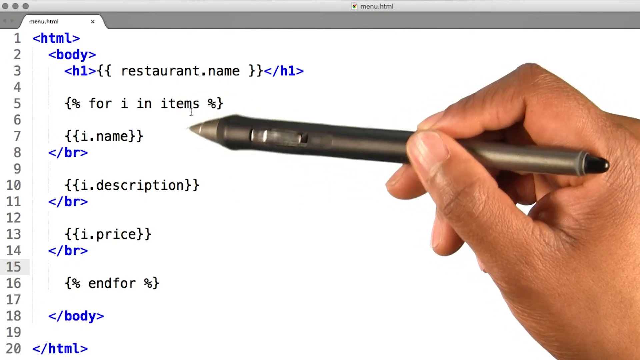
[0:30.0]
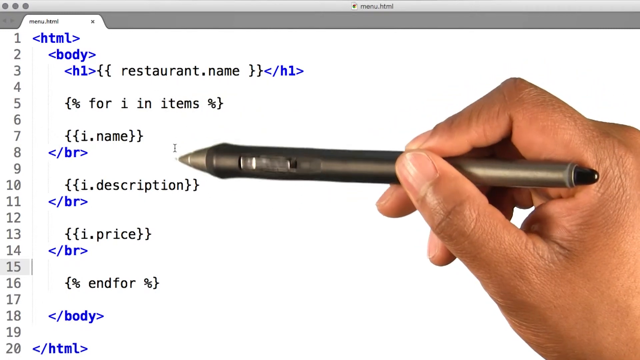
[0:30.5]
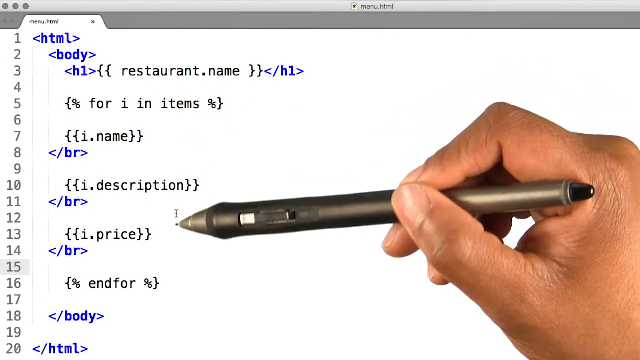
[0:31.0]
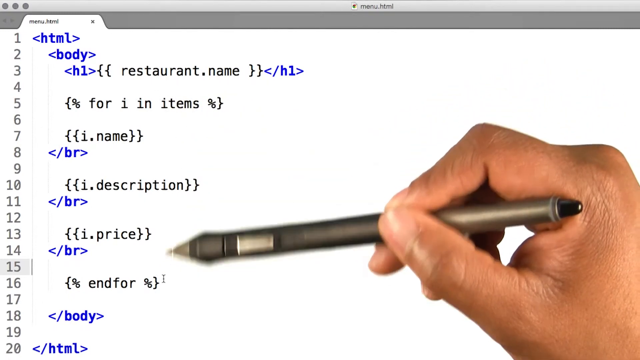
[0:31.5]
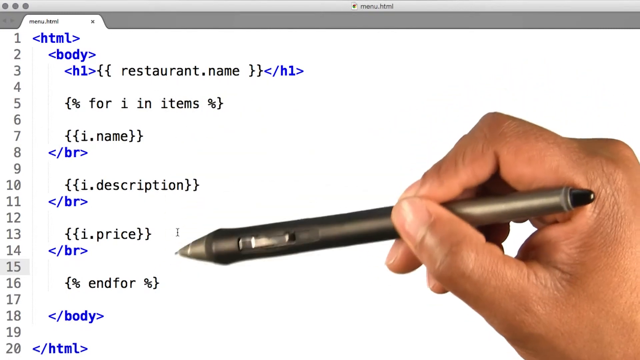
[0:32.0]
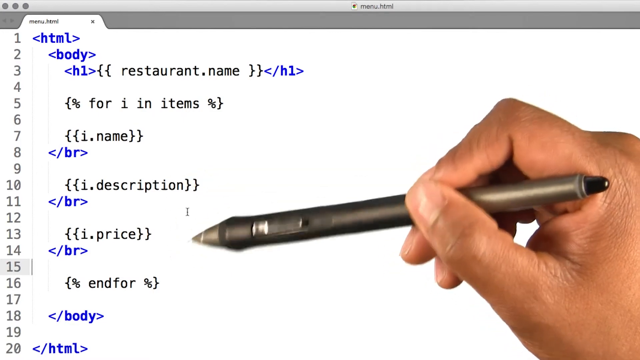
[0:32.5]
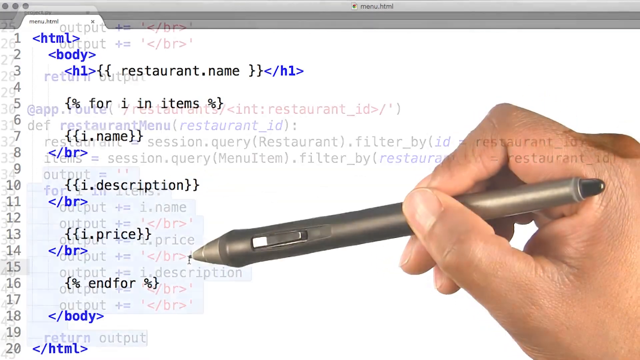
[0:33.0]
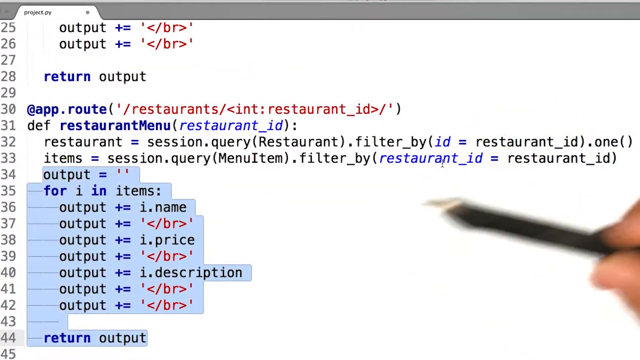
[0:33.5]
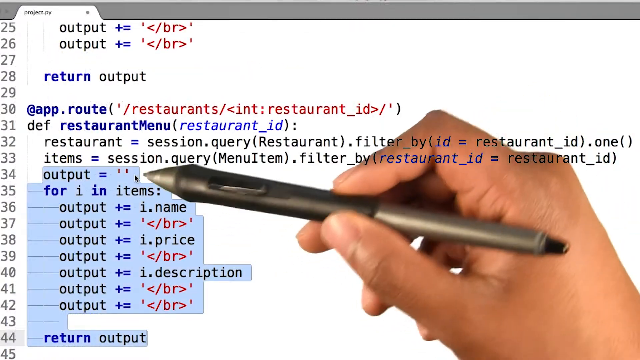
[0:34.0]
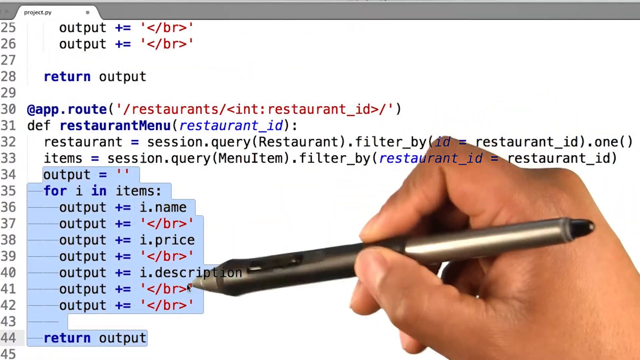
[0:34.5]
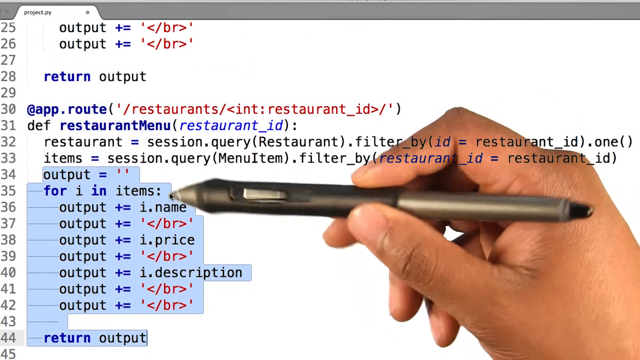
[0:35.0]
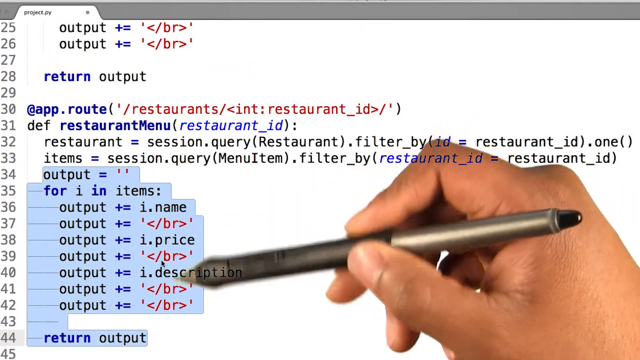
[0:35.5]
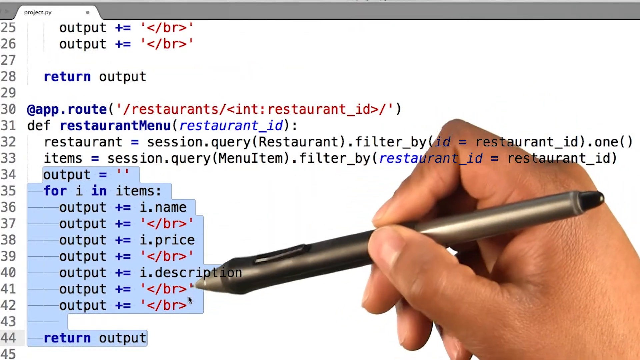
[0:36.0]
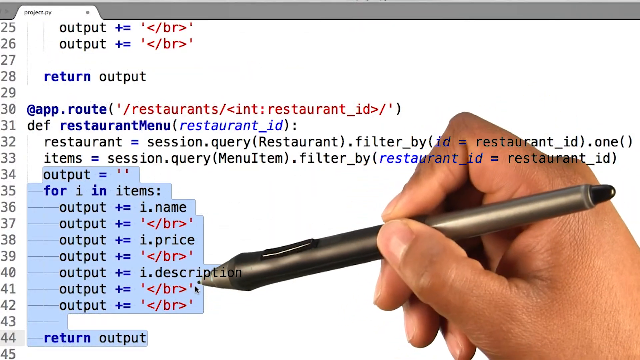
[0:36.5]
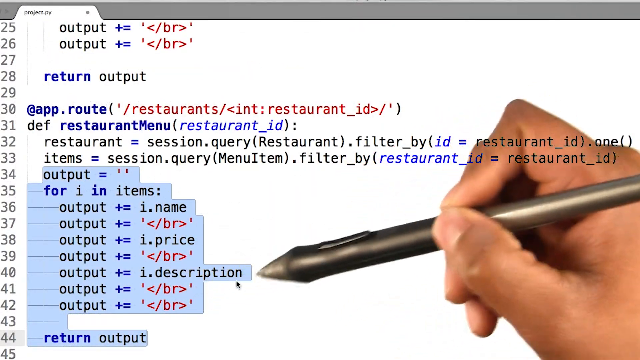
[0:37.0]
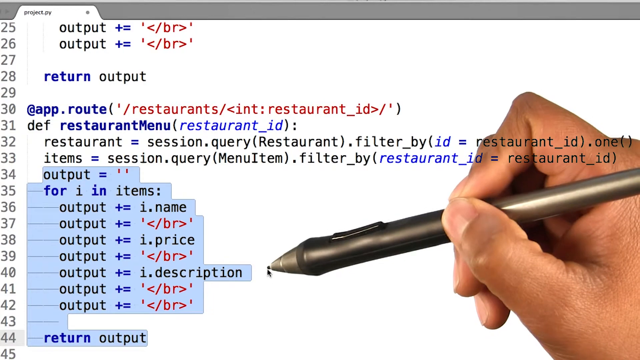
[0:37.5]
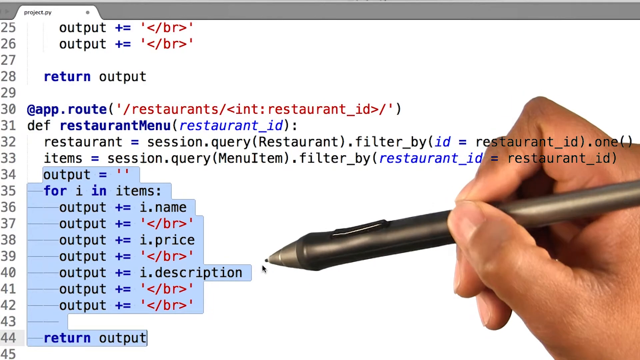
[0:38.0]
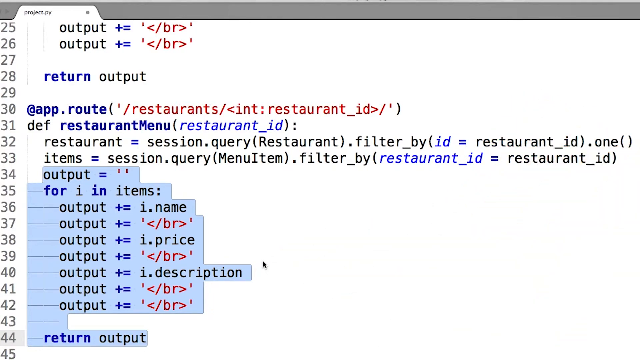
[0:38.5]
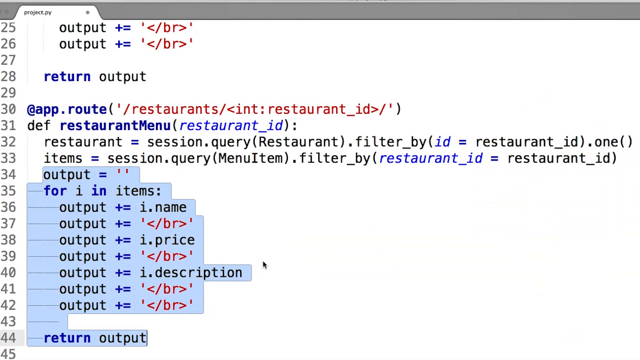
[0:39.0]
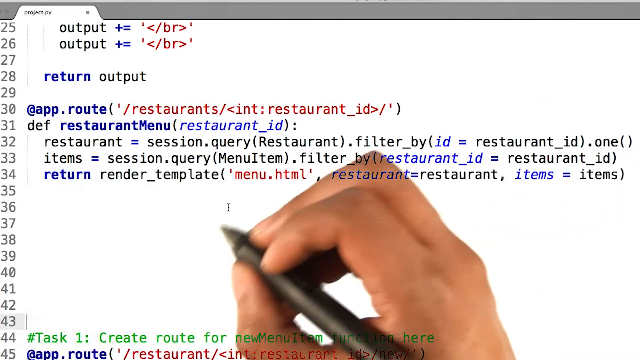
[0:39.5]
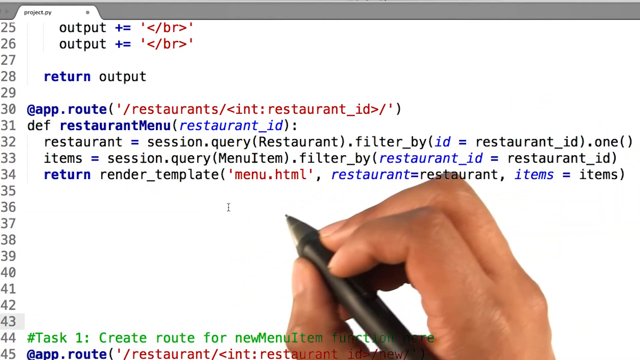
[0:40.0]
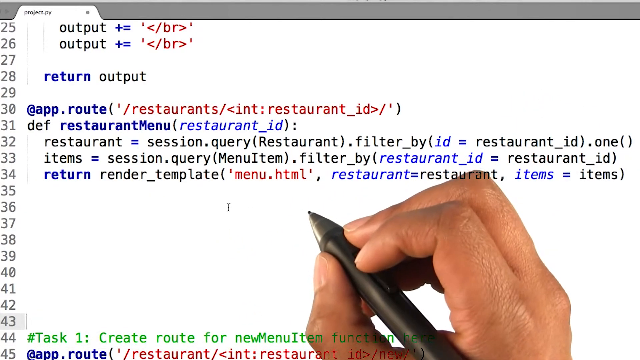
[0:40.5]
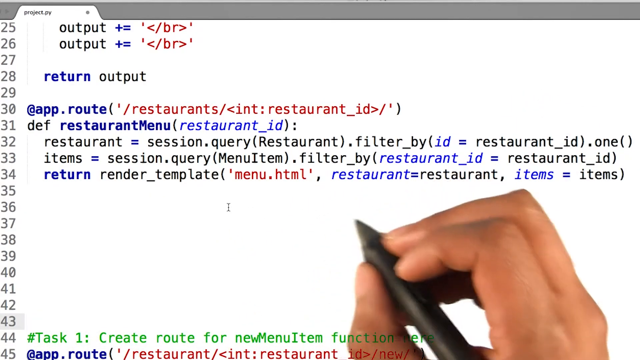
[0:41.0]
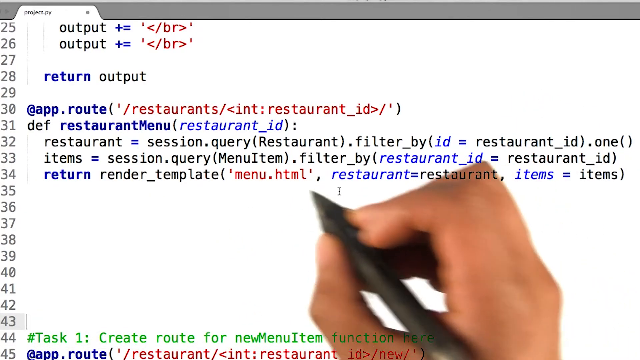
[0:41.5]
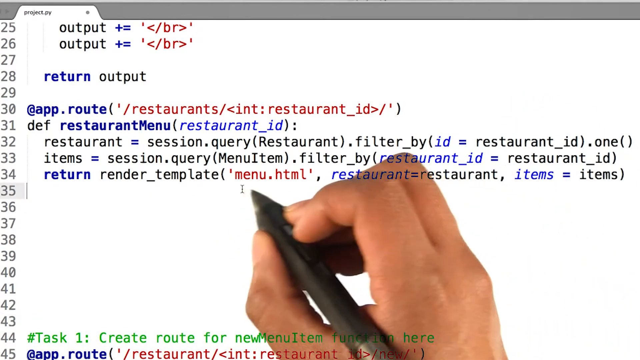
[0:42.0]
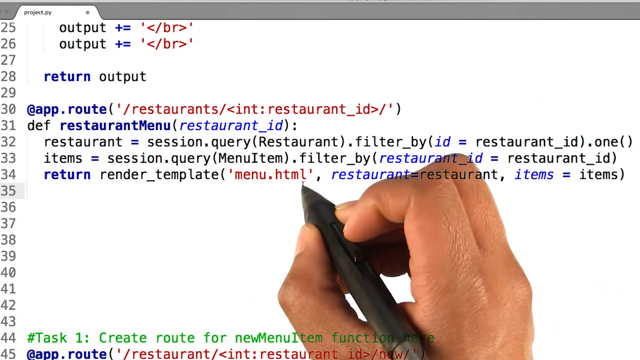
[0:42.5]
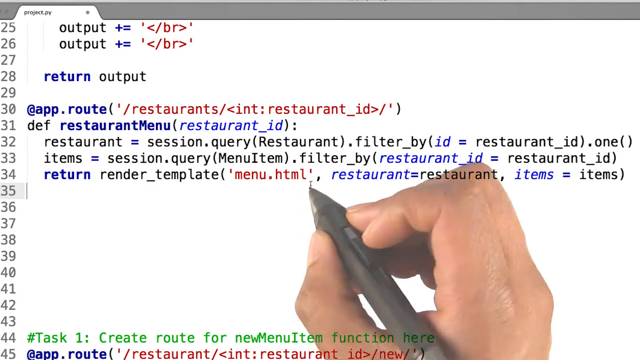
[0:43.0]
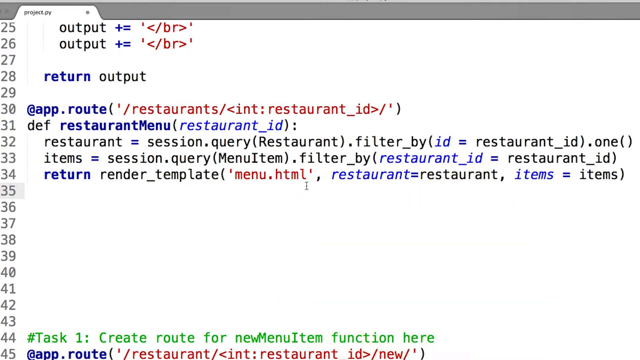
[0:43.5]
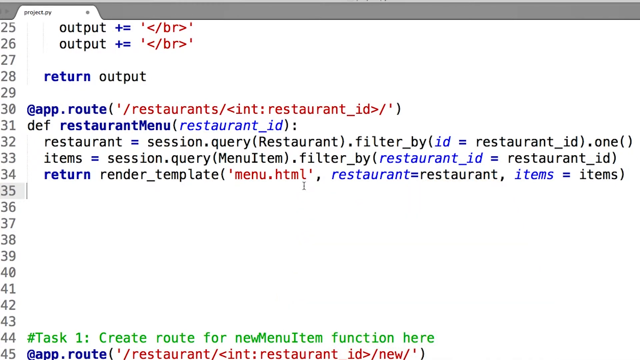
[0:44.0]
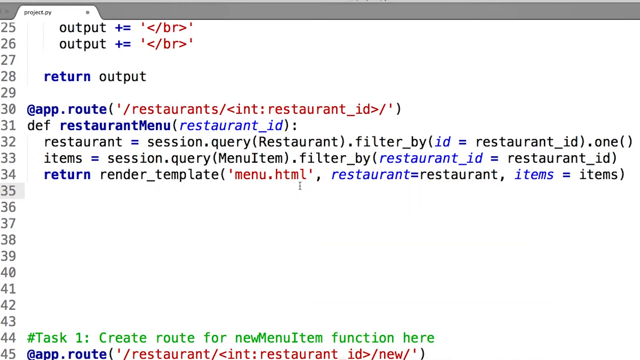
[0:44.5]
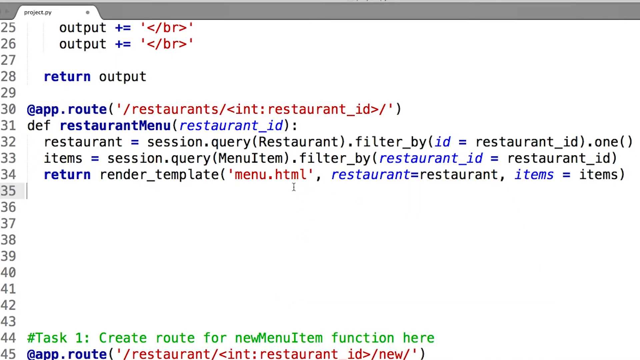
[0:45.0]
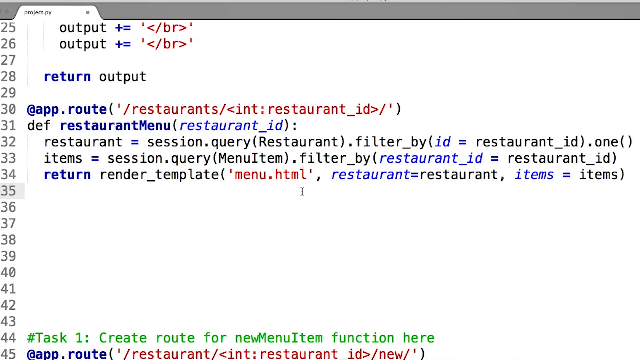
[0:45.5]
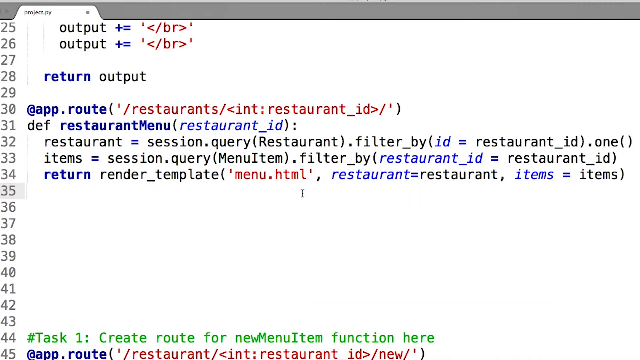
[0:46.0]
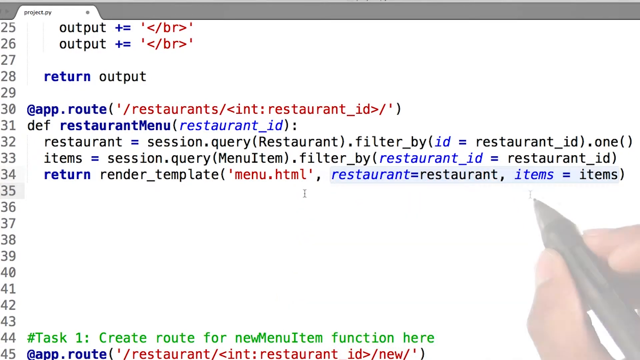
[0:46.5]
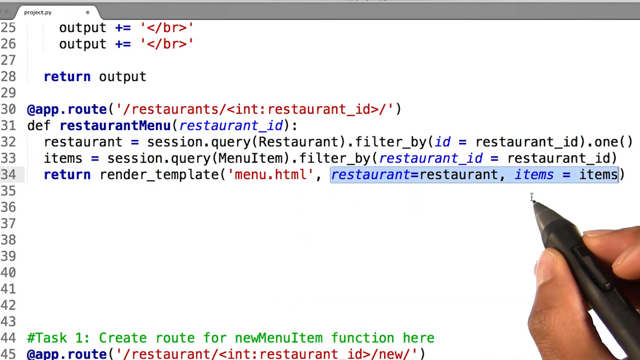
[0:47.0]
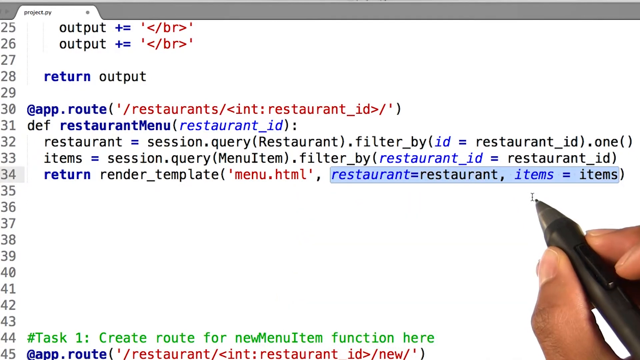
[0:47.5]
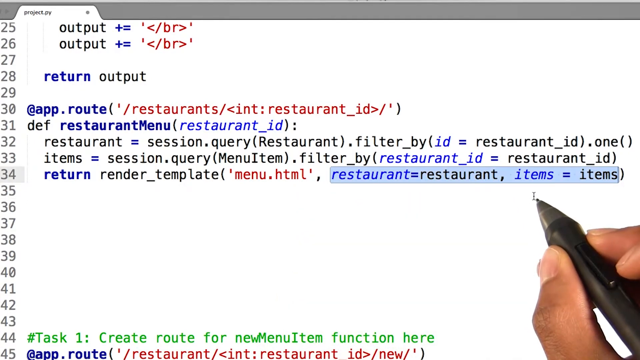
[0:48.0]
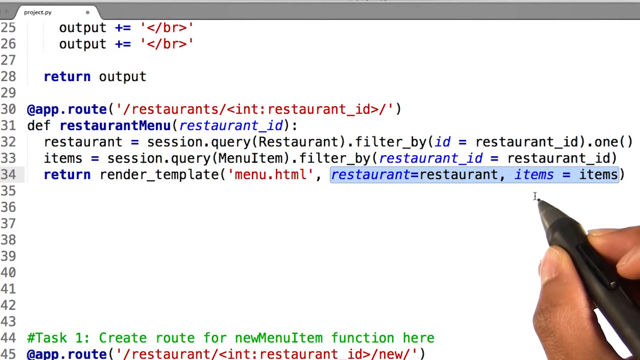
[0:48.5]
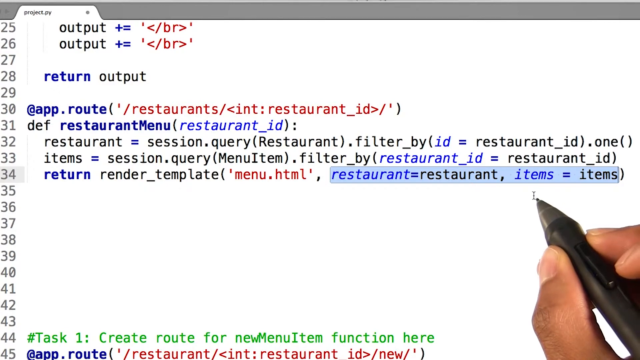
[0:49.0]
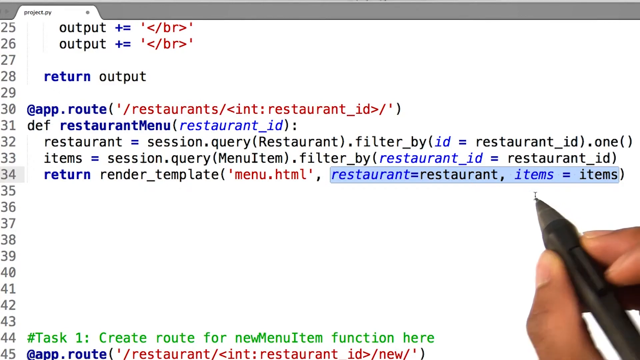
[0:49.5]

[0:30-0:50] In the notepad, a hand holding a black pen points at the code and demonstrates what each function does, in what appears to be a coding or development class related to information technology. A restaurant code, a restaurant description, is visible on the screen. He goes over what was written in the code and erases everything to focus step by step, using the pen to go through each line little by little. Instructions are given for each line, then erased and created again, demonstrating each one in turn.